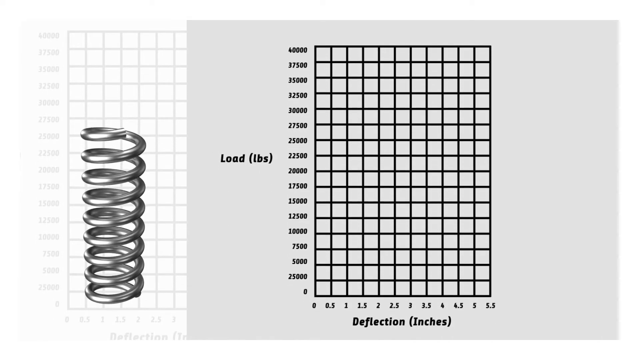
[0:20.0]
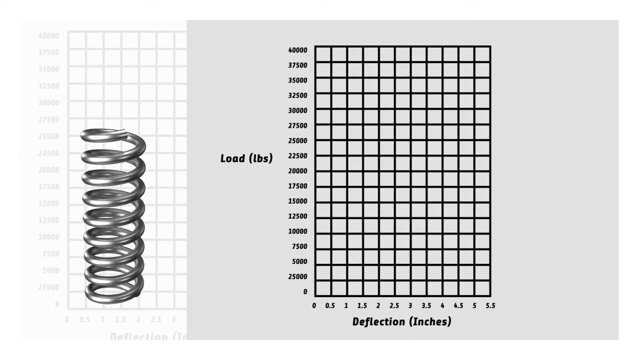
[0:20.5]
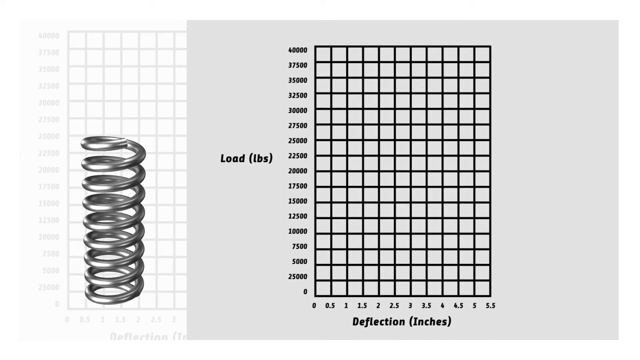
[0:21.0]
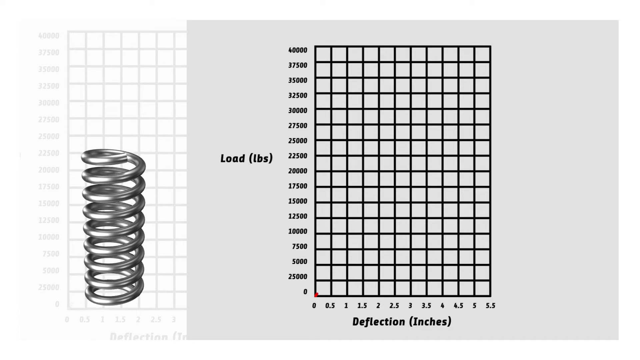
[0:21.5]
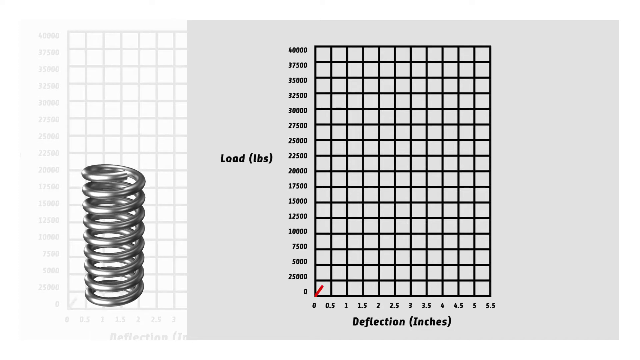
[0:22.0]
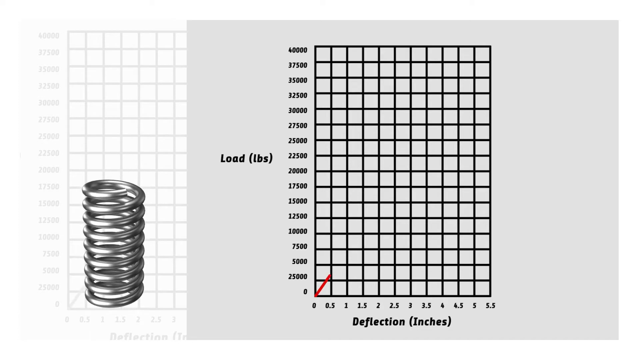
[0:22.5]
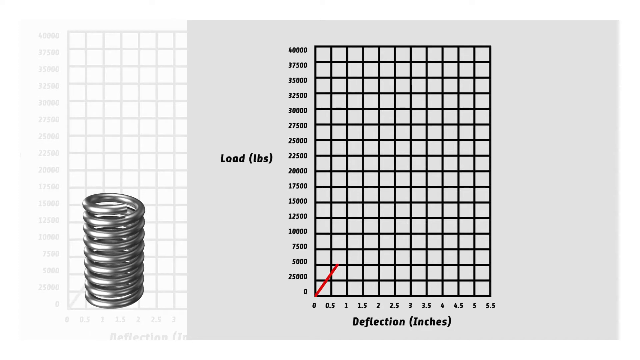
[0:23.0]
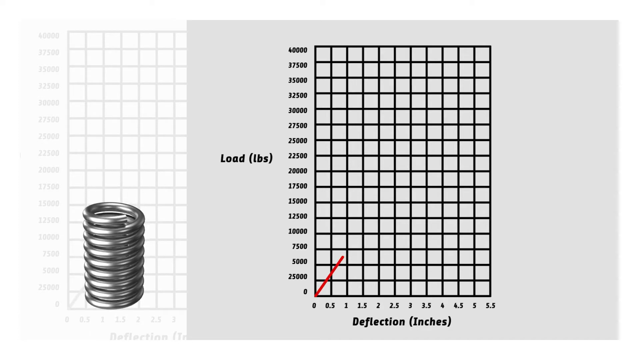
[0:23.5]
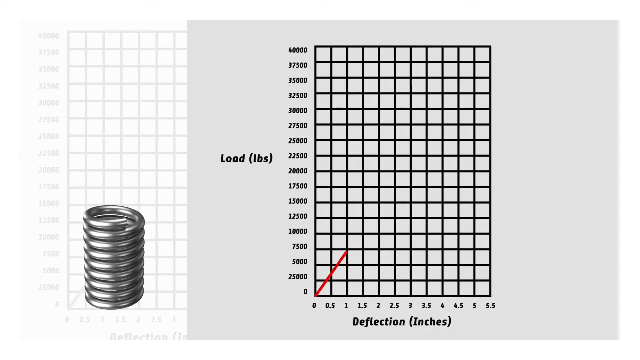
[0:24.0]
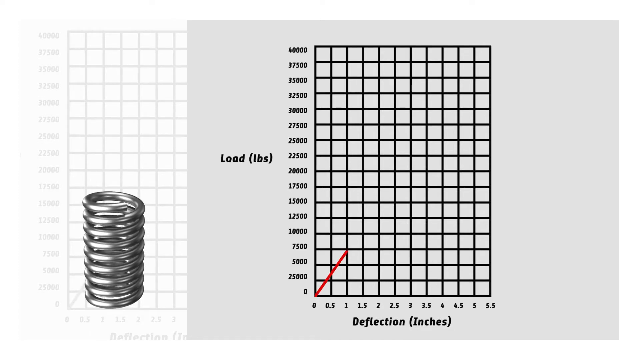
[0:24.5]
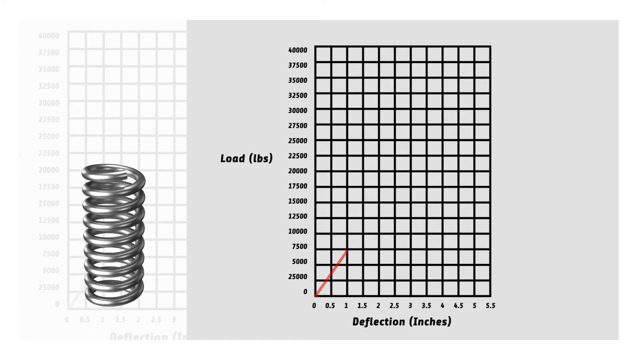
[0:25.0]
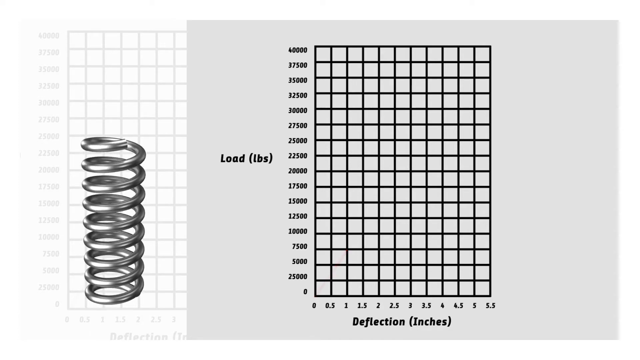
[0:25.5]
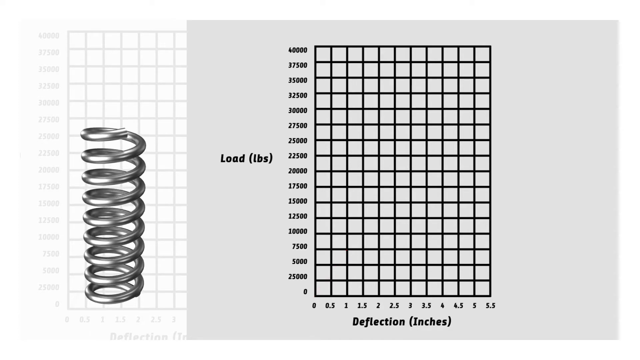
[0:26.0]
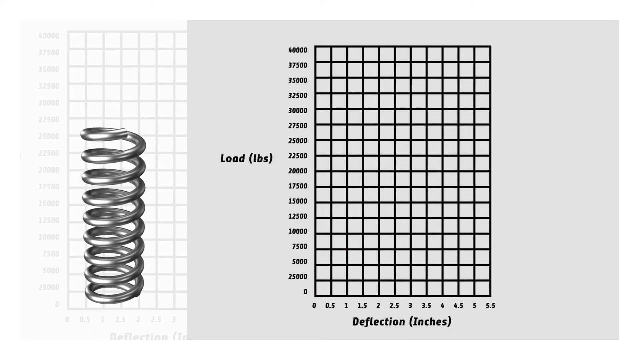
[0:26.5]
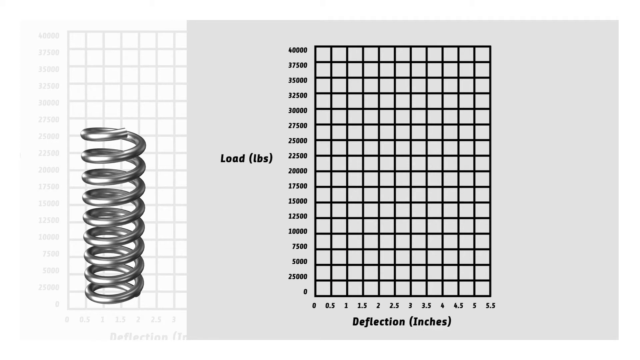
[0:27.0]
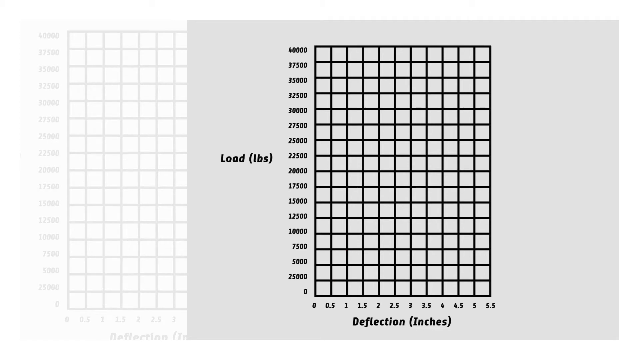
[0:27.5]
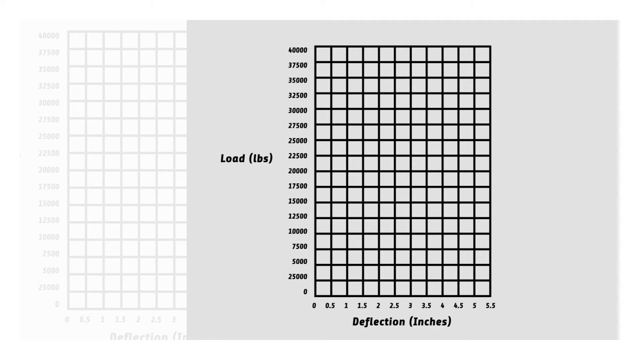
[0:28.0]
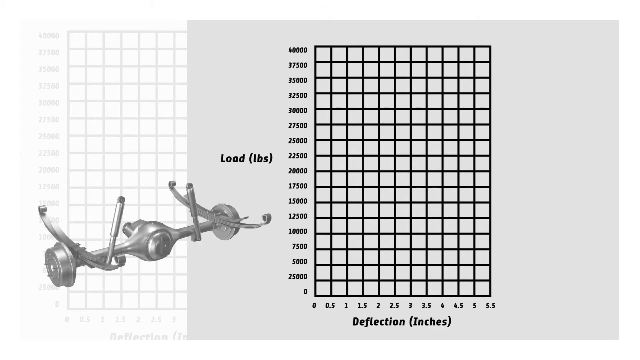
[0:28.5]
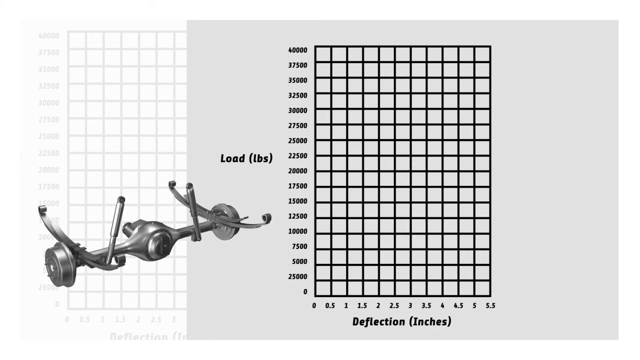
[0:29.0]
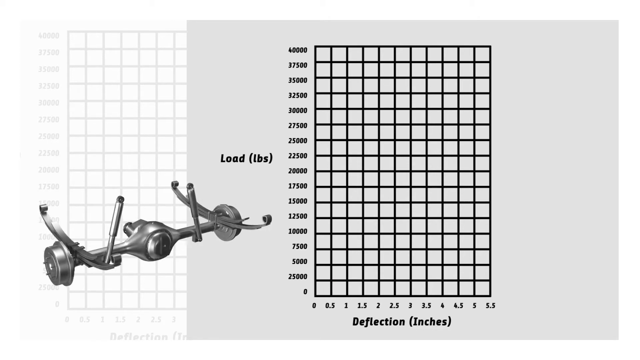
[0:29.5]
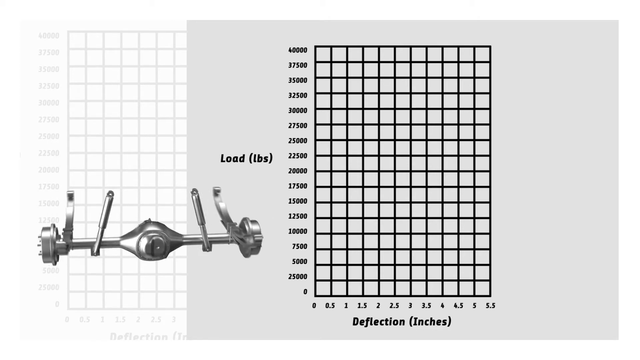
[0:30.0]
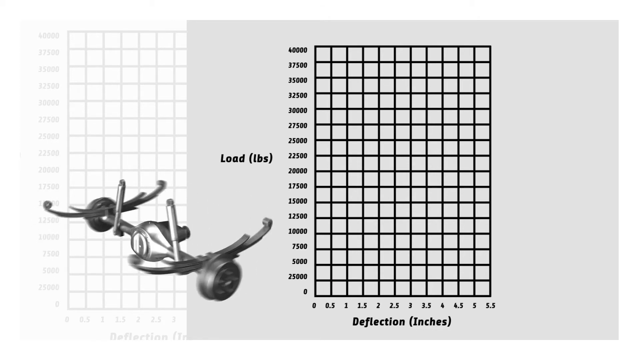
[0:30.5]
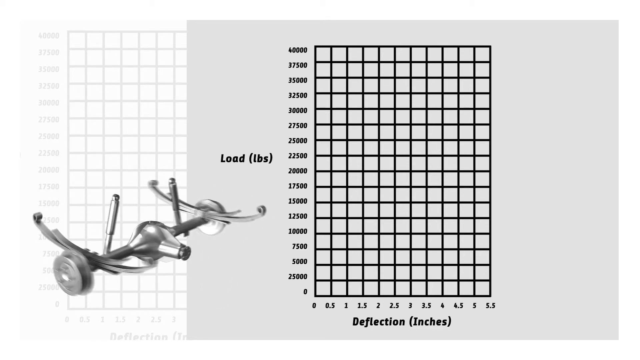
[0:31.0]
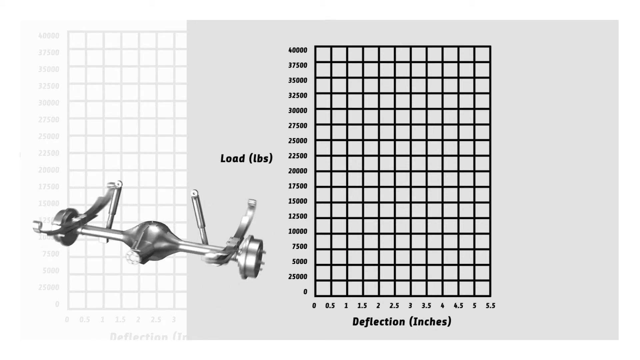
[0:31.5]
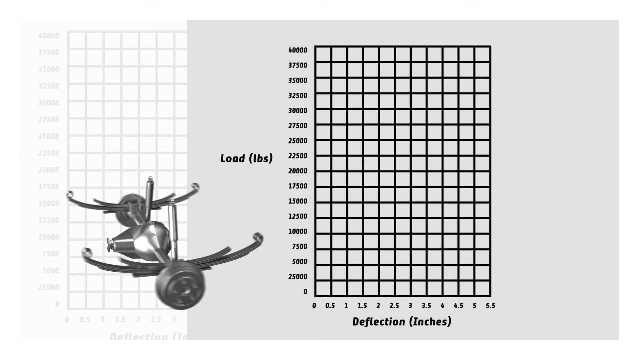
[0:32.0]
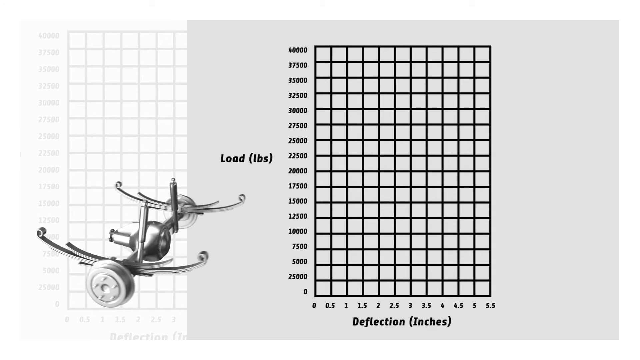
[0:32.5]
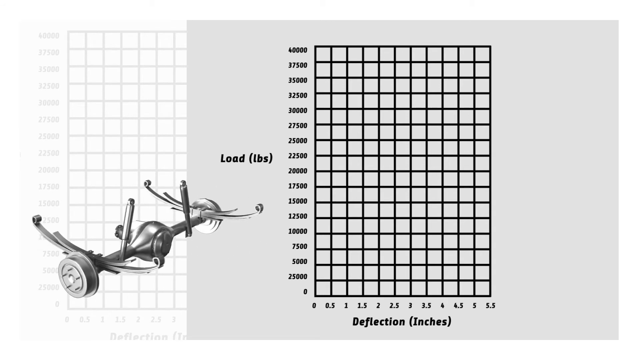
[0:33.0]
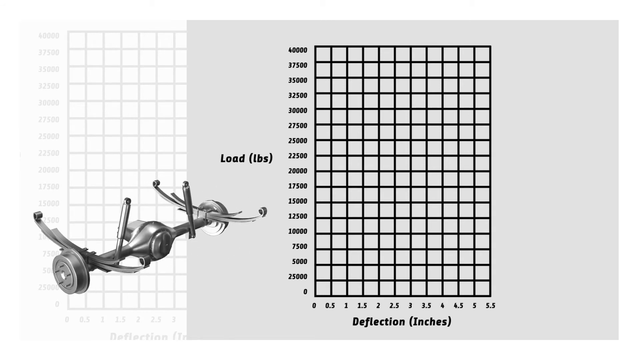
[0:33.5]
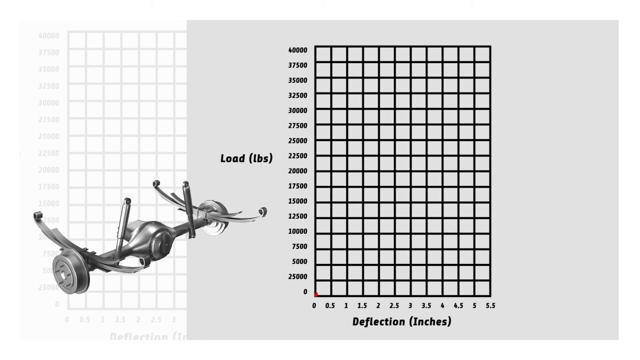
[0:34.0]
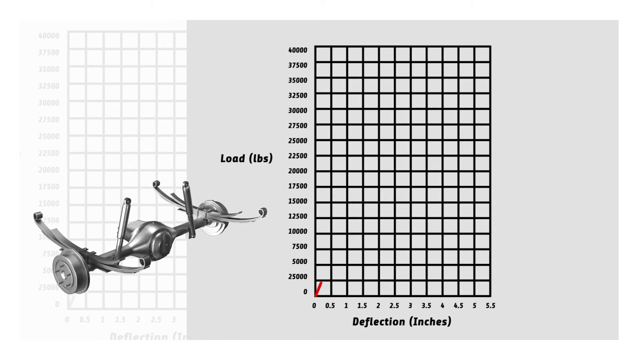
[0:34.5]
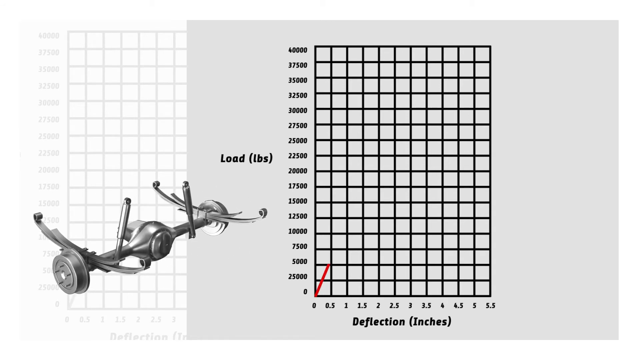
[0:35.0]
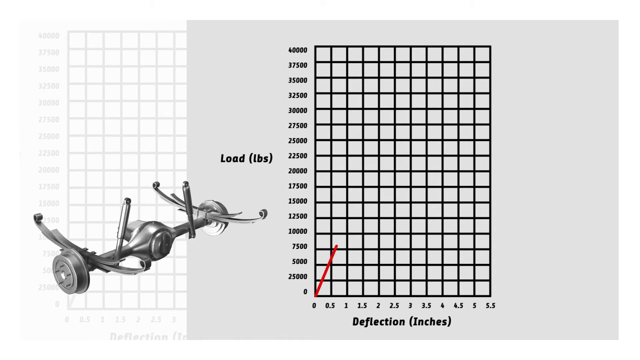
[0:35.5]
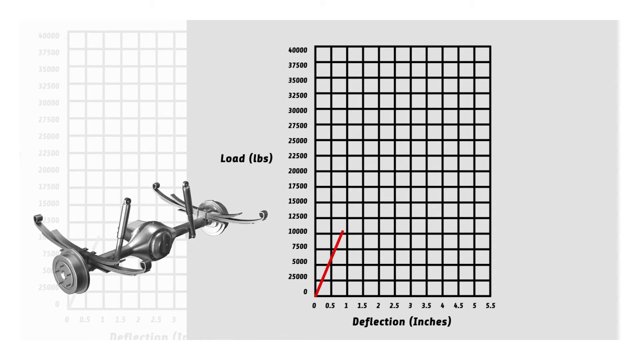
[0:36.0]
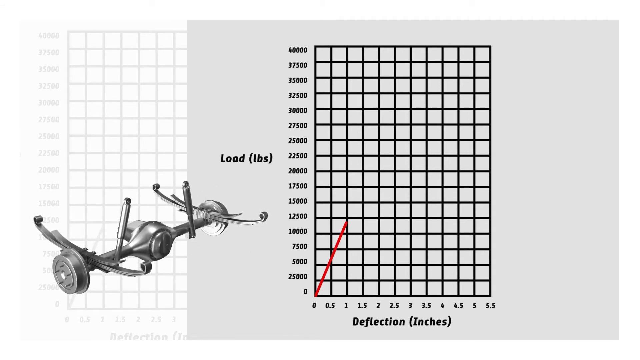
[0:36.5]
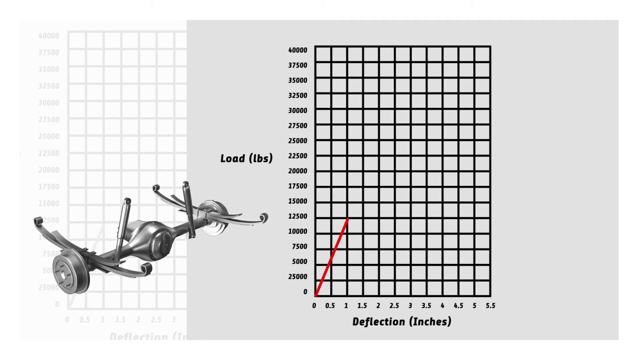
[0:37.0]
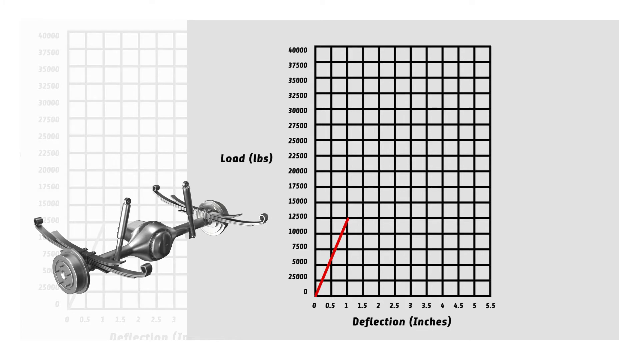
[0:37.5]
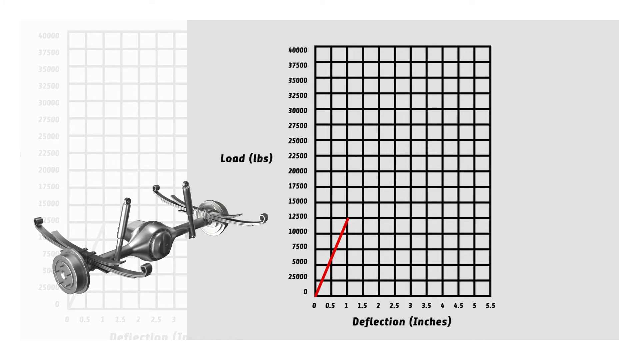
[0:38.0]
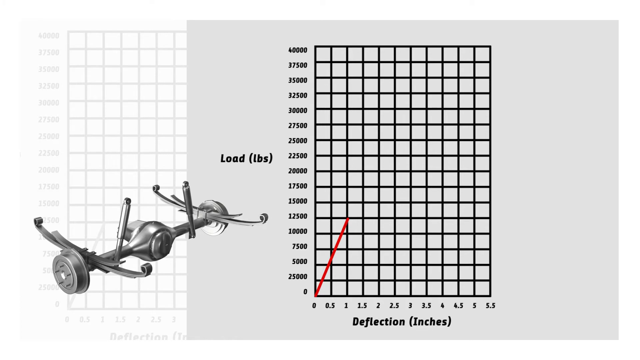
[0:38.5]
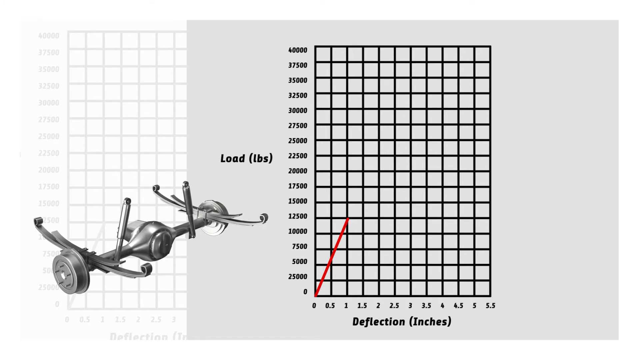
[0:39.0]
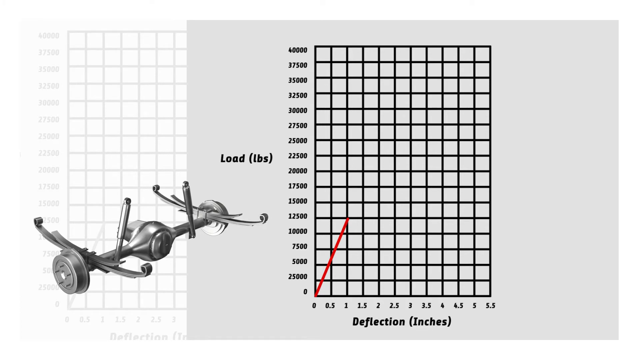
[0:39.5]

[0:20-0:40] The spring on the left side is still turning, and the graph on the right side shows load and deflection. The spring gets compressed downward, moves back up, then disappears, and a vehicle axle appears in its place. The axle has shock absorbers, leaf springs, drum brakes, and a differential right in the center. The axle rotates clockwise twice. On the chart on the right, a red line starts to come up from the corner, moving up diagonally toward the right until it reaches a load of 12,500 pounds at a deflection of 1. The graph's load axis goes from zero up to 40,000 pounds, and the deflection along the bottom goes from zero to 5.5. Behind where the spring and the axle appear there is another graph, kind of grayed out.